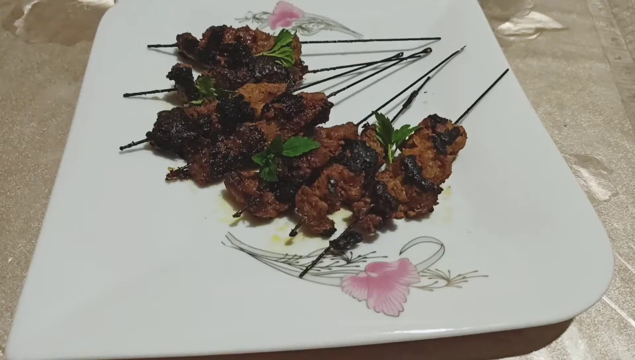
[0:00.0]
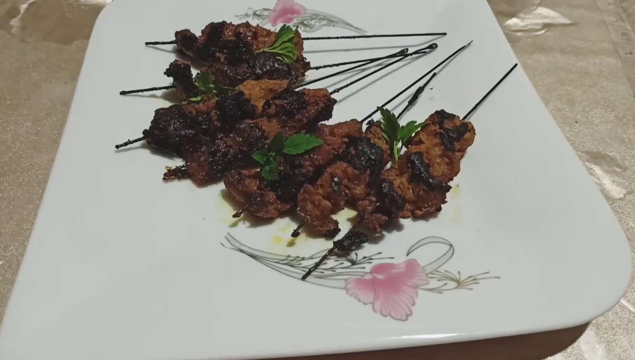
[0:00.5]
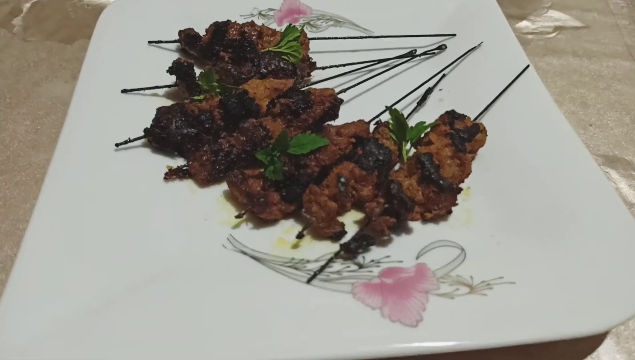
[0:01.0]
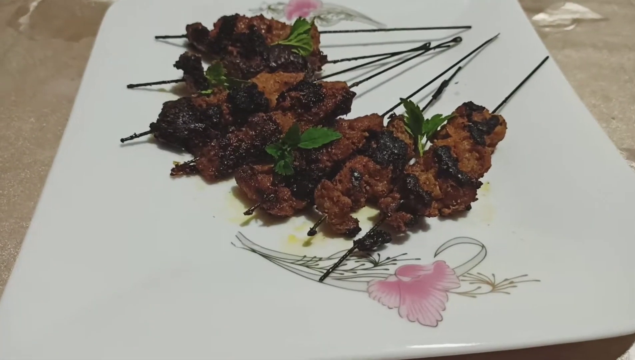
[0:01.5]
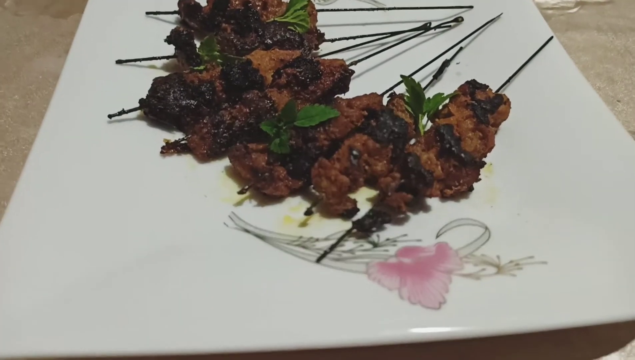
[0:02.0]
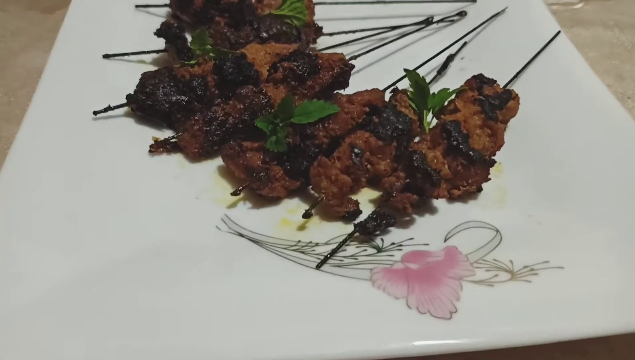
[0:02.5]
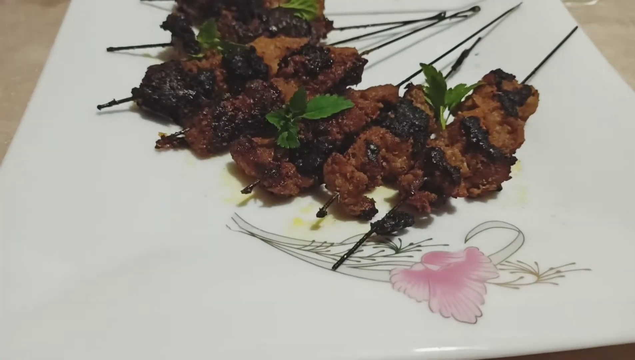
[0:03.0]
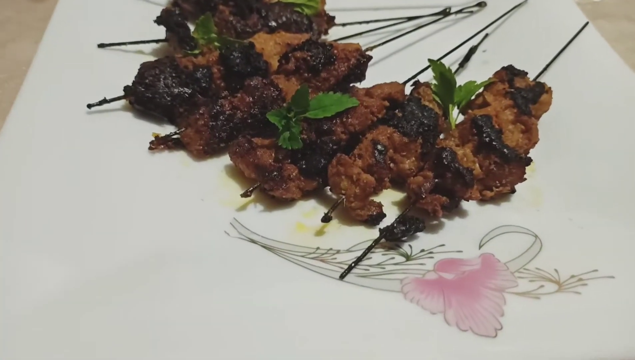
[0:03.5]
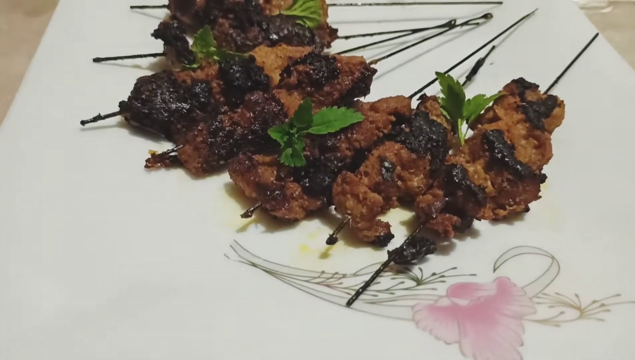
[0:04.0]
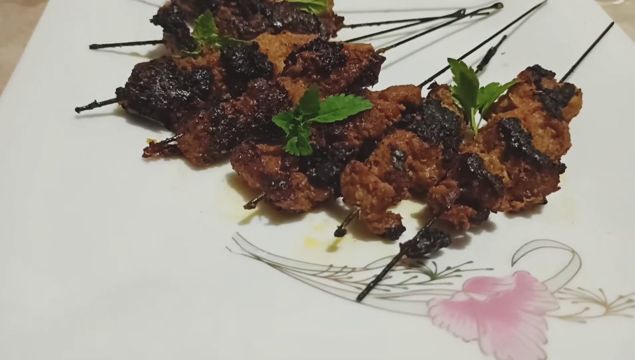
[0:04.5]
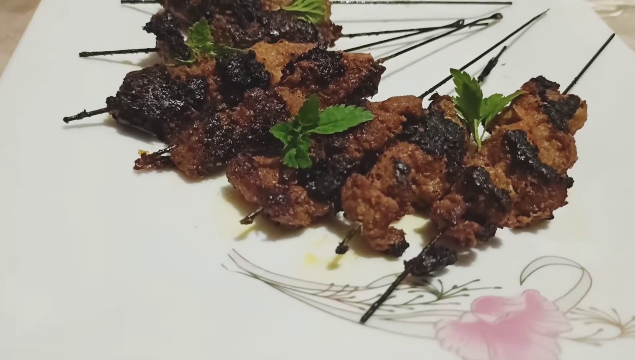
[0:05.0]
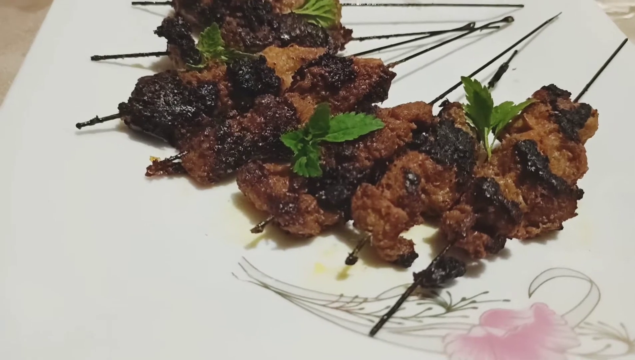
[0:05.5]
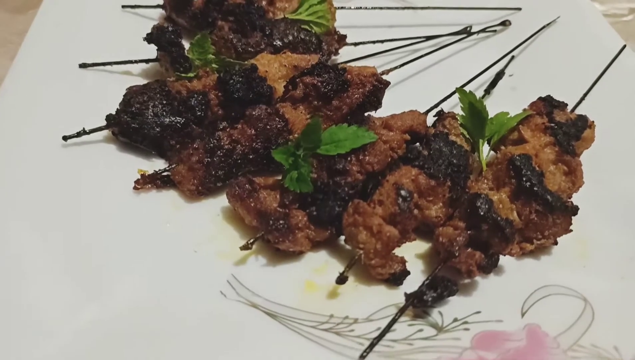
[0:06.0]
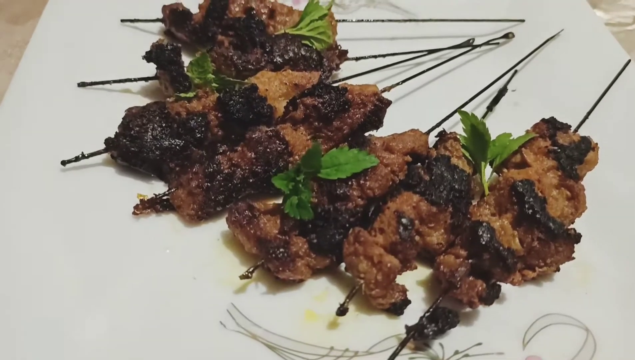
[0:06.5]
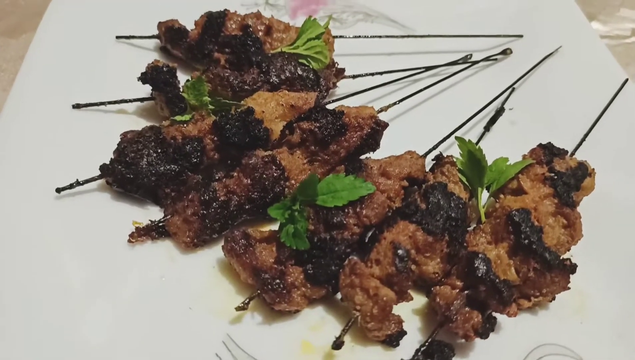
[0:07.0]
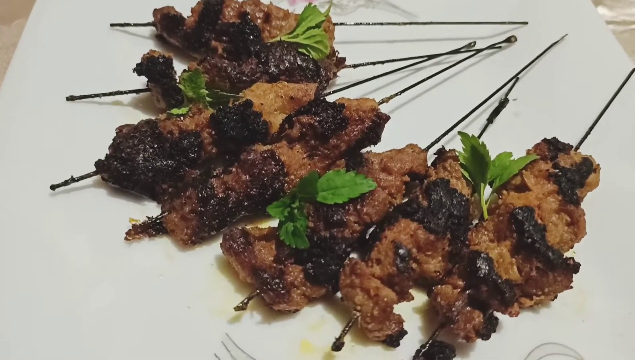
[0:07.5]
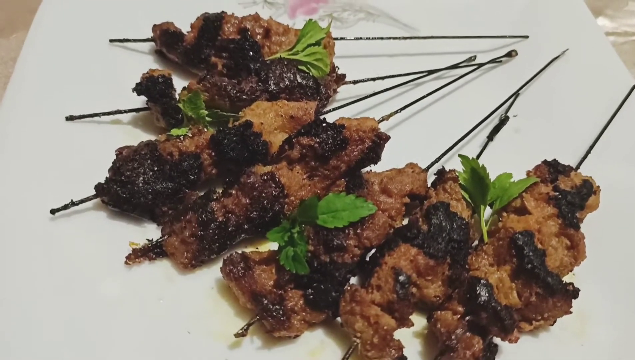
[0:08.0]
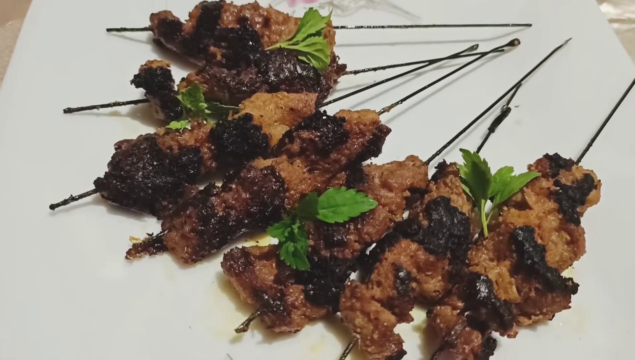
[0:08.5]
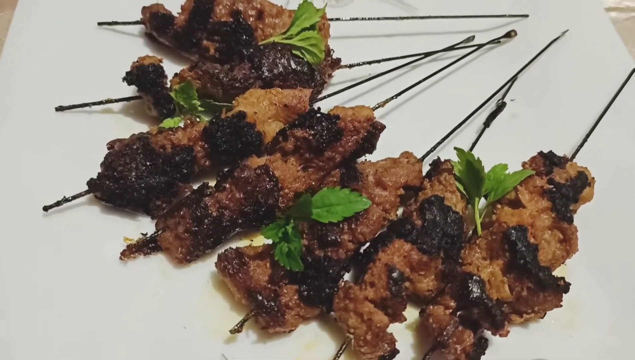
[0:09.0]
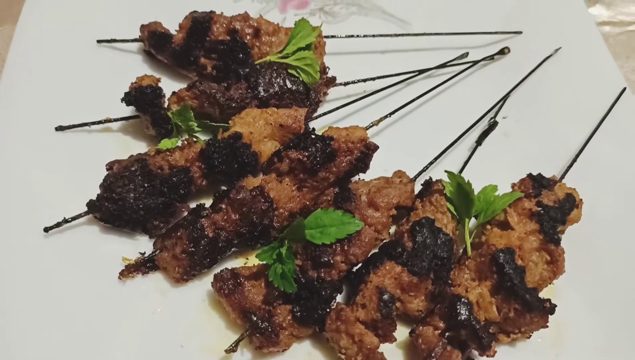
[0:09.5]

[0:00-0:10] Seven skewers of meat are laid out on a square white dish with floral pattern designs along its top and bottom. The meat on the skewers appears fully cooked and is seasoned with a green leafy vegetable on top. The skewers are lined up alongside one another in a half arc, with their bottoms pointing toward the top right of the plate. The plate is on top of a silver tablecloth.